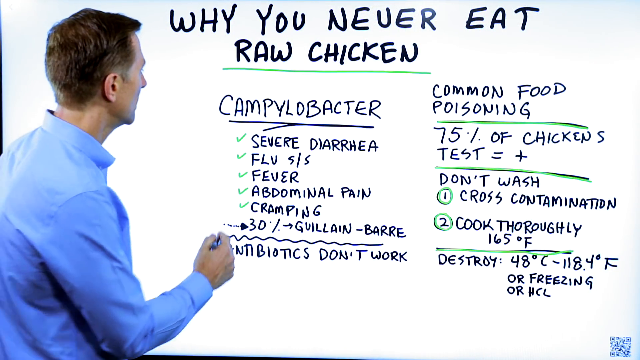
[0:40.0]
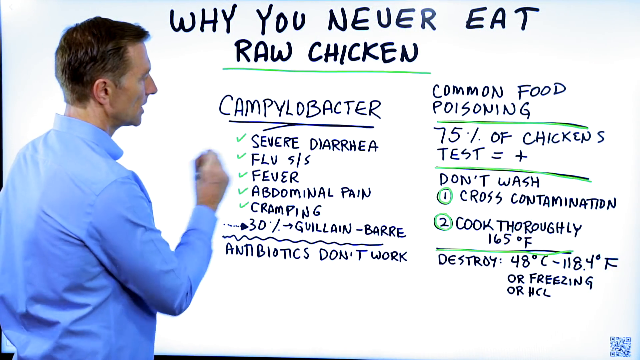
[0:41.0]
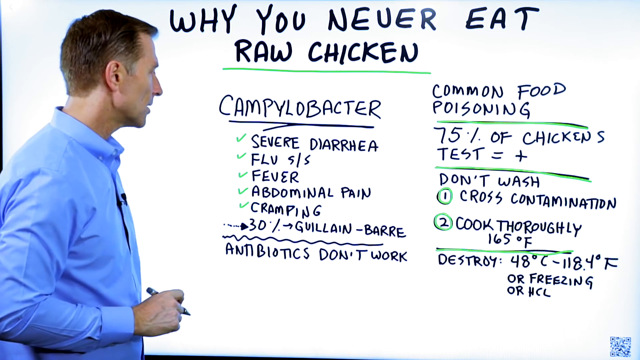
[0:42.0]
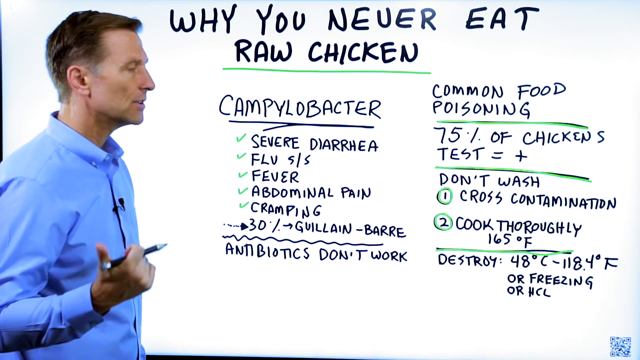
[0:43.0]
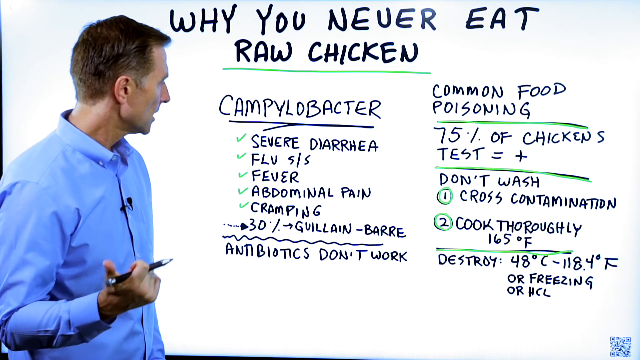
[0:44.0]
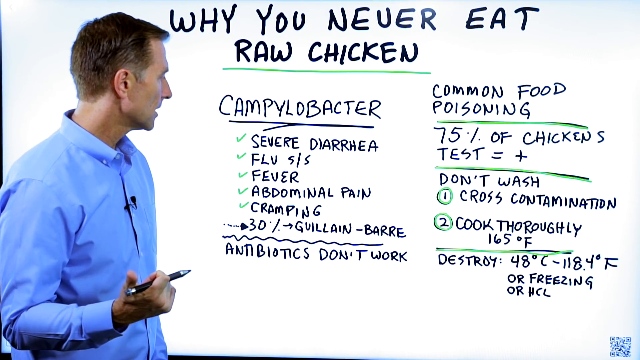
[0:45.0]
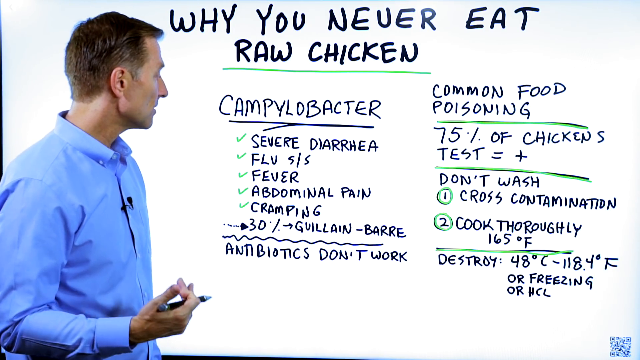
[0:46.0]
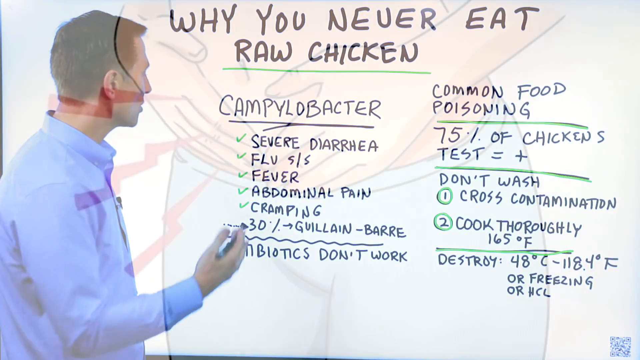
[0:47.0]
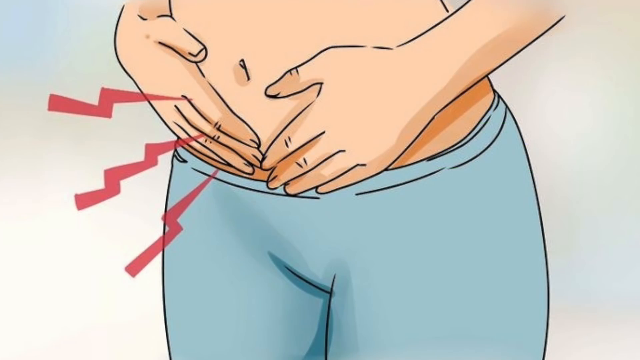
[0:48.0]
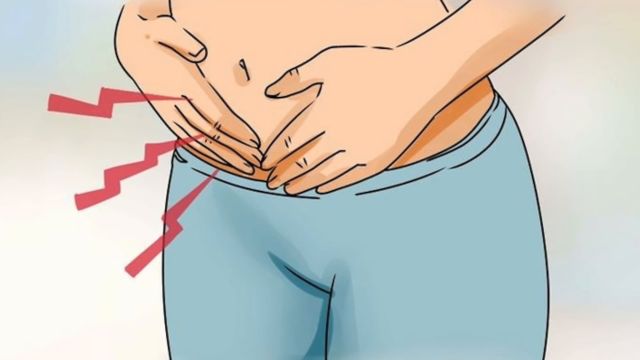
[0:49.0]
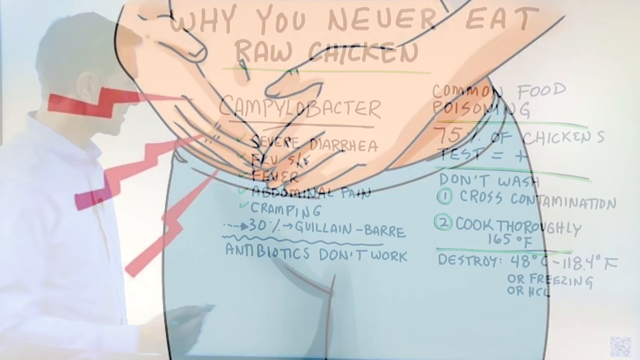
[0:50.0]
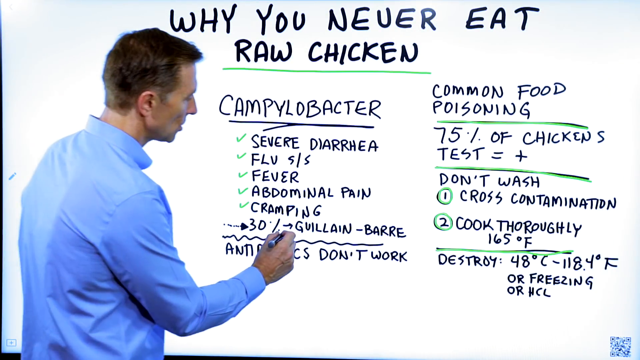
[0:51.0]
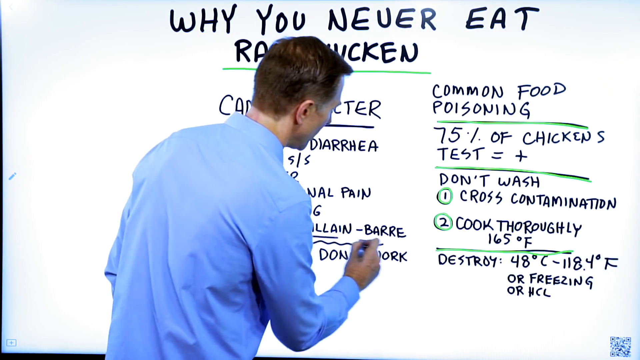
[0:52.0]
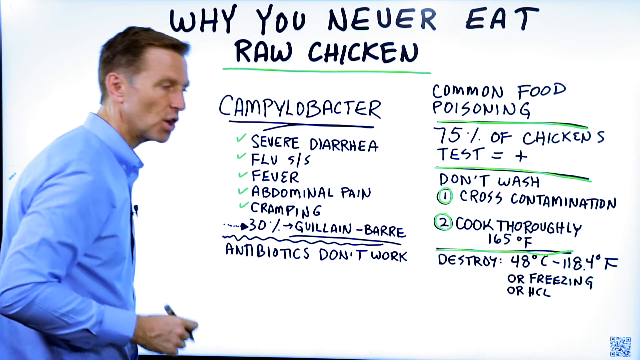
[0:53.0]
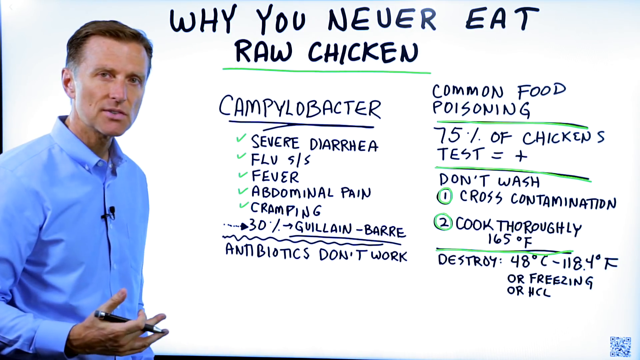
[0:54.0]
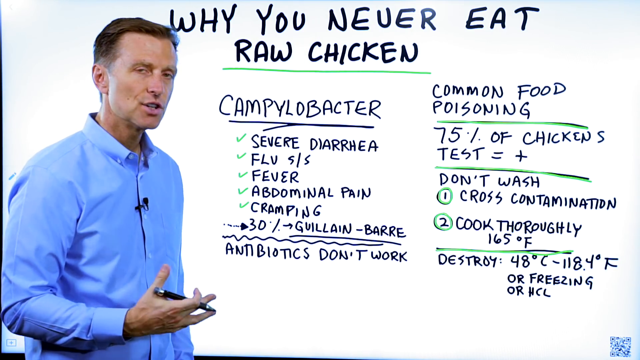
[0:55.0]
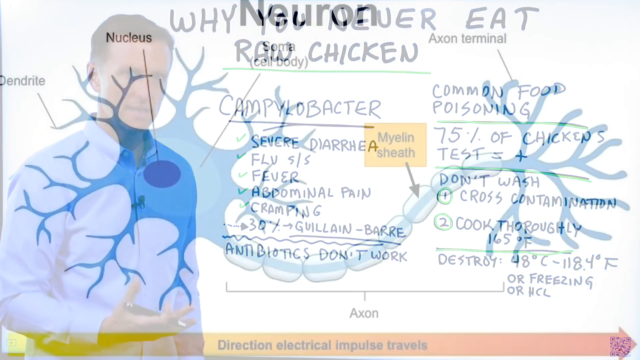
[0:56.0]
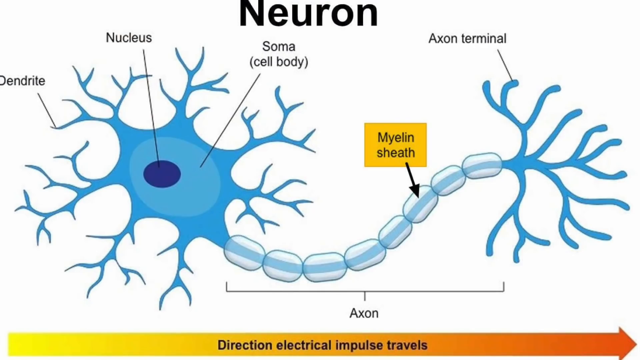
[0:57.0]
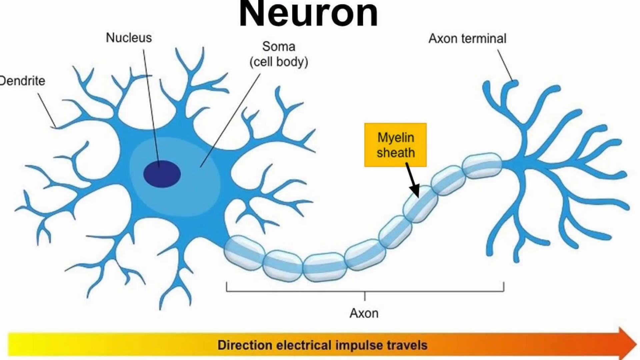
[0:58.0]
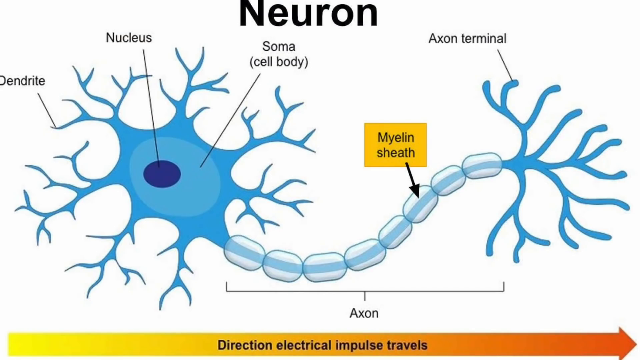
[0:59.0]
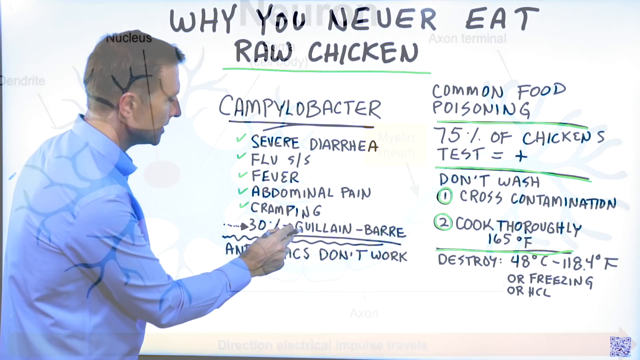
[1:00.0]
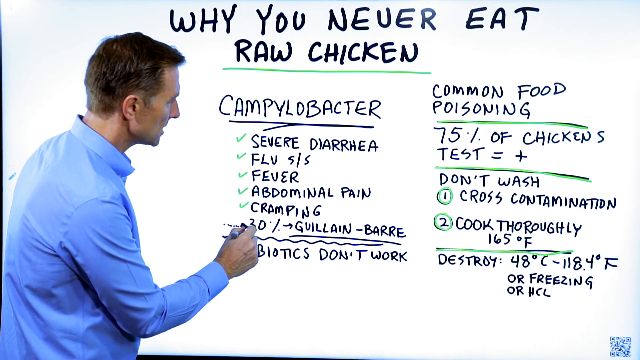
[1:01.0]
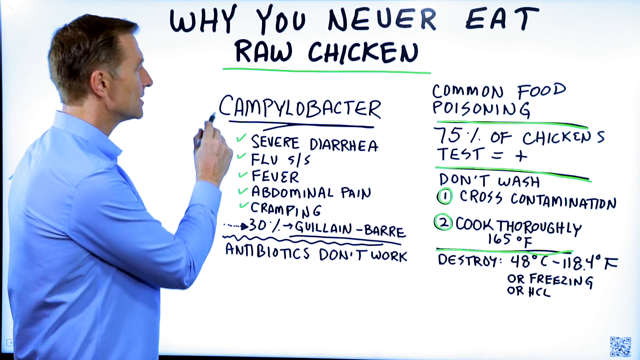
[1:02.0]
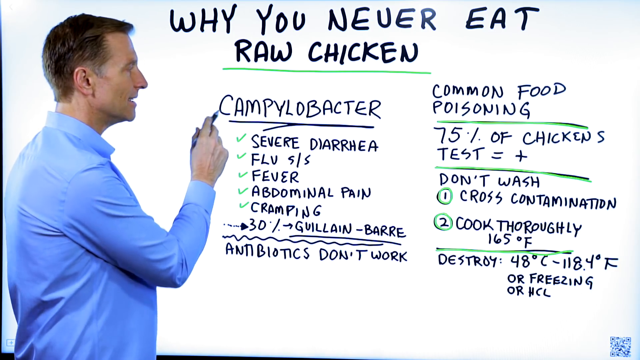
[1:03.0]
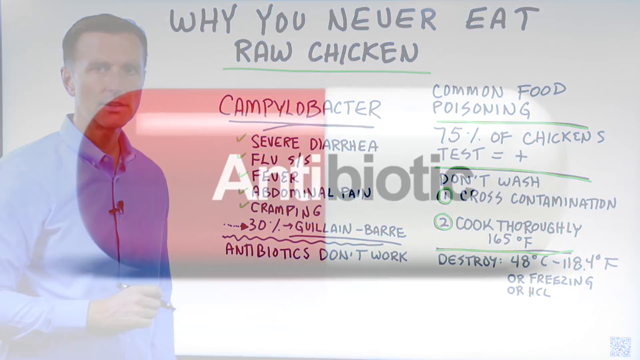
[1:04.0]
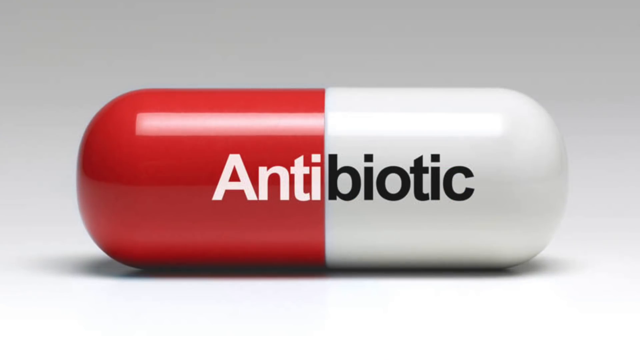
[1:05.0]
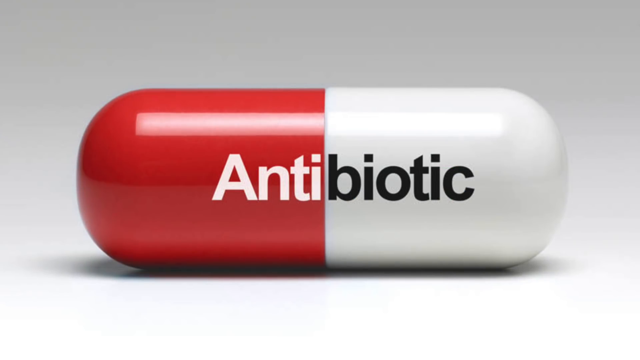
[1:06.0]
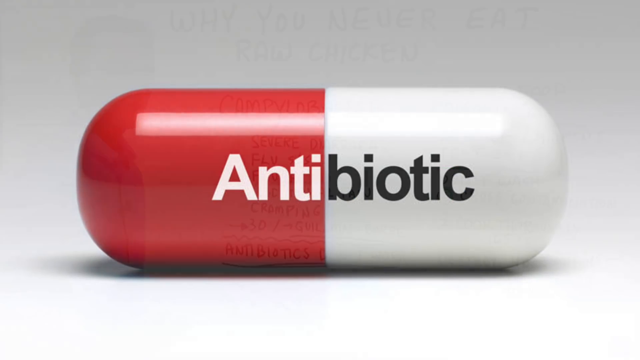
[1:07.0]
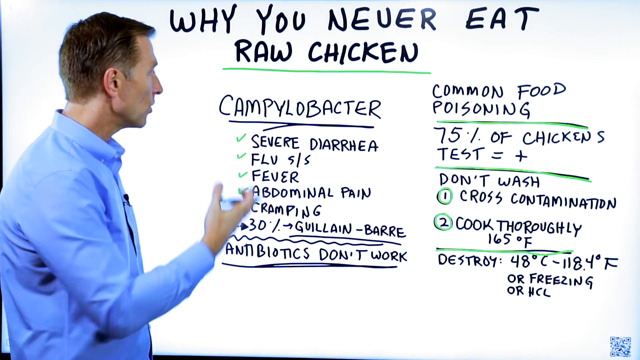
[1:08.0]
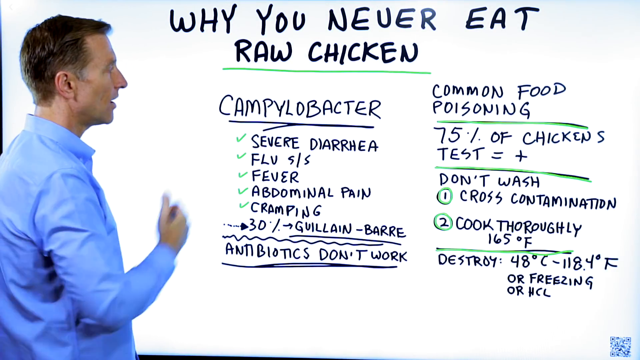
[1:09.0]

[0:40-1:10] The teacher points at a word on the whiteboard. A picture shows a person holding his or her stomach, with arrows coming from the stomach indicating pain there. The teacher then points to the right and underlines something. Next, a picture of a neuron appears, labeled with "soma", "cell body", "axon", "axon terminal", "nucleus" and "dendrite", along with the words "please visit us on Pinterest". The teacher continues the lesson, and a picture of a red and white pill is shown on the screen.